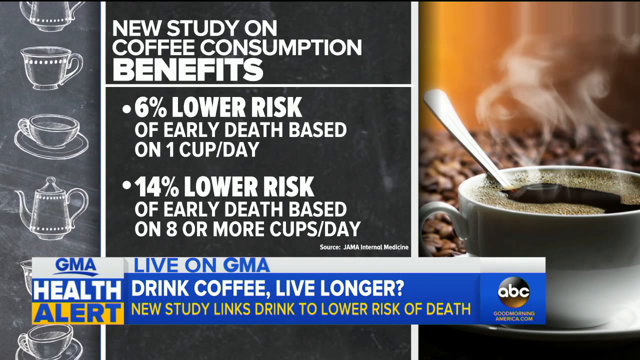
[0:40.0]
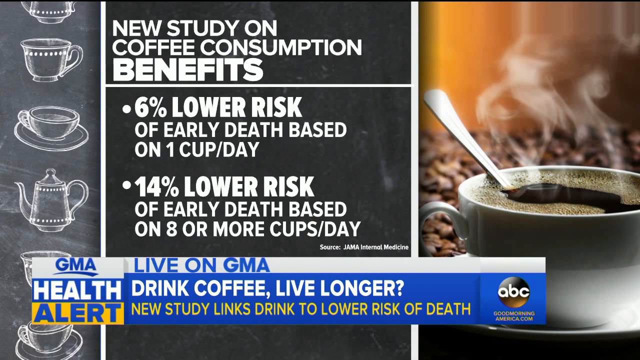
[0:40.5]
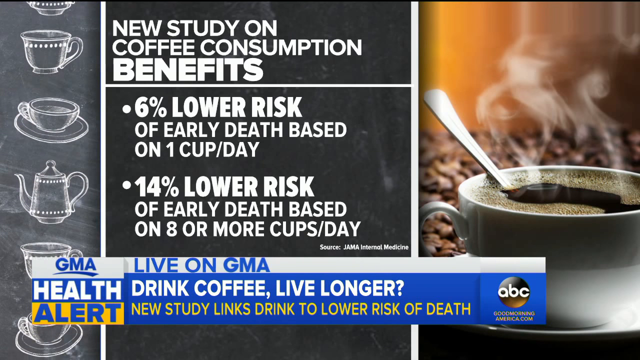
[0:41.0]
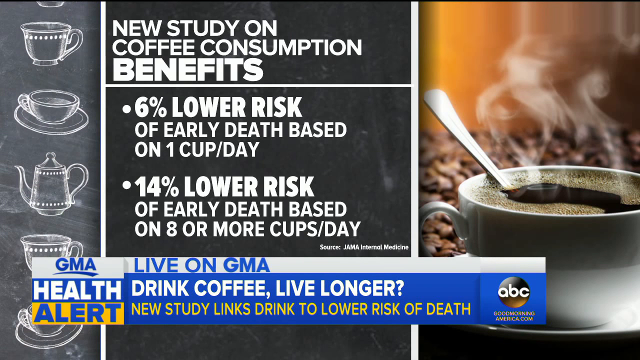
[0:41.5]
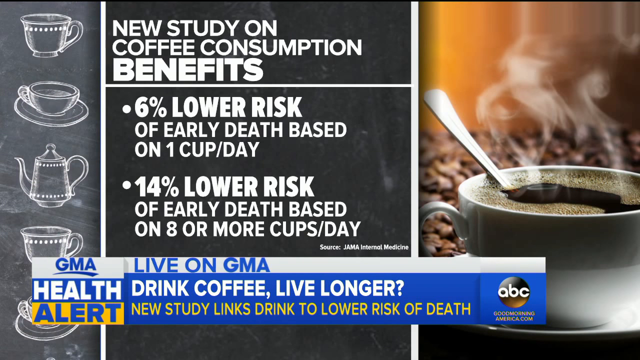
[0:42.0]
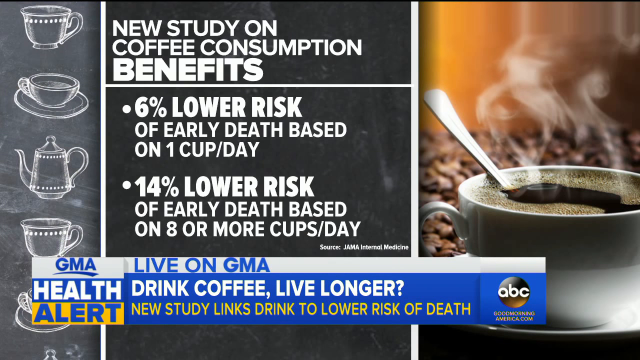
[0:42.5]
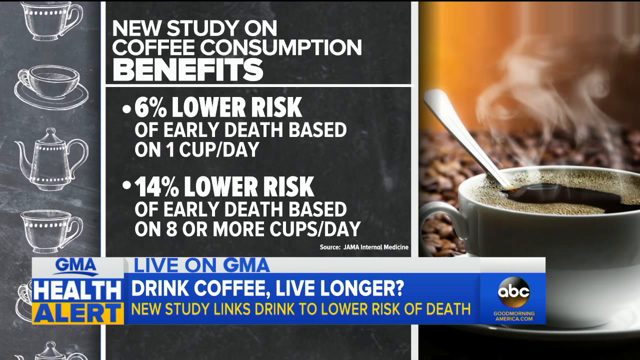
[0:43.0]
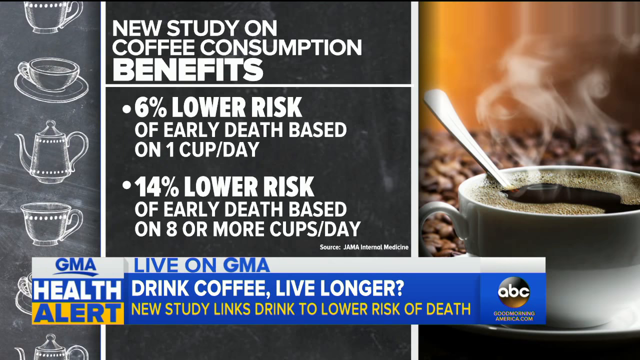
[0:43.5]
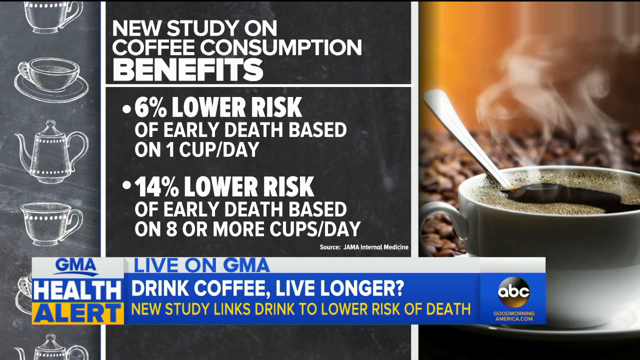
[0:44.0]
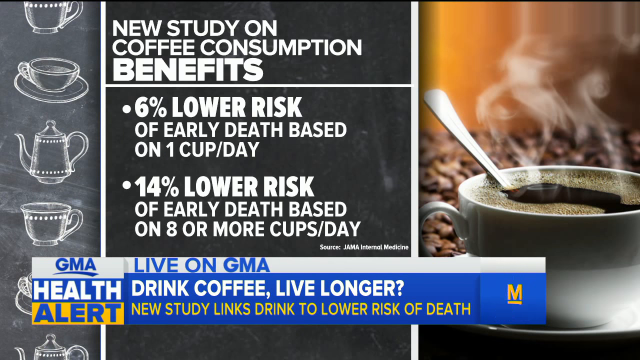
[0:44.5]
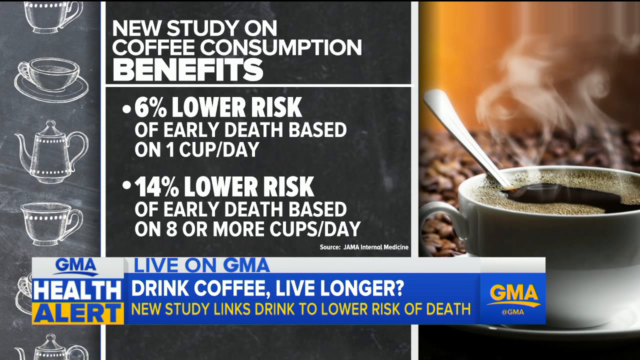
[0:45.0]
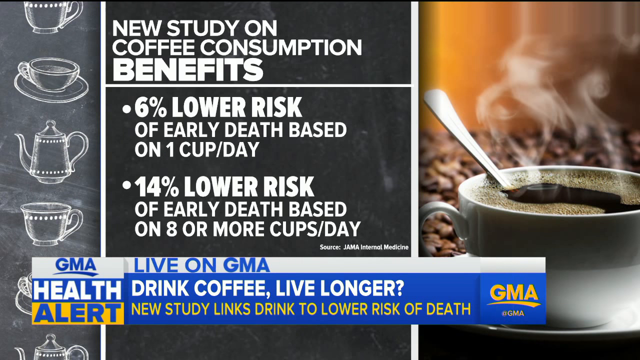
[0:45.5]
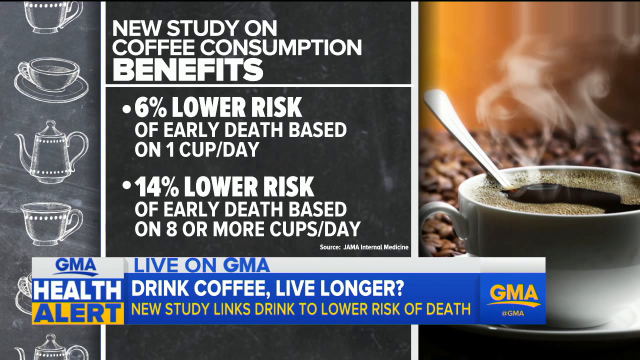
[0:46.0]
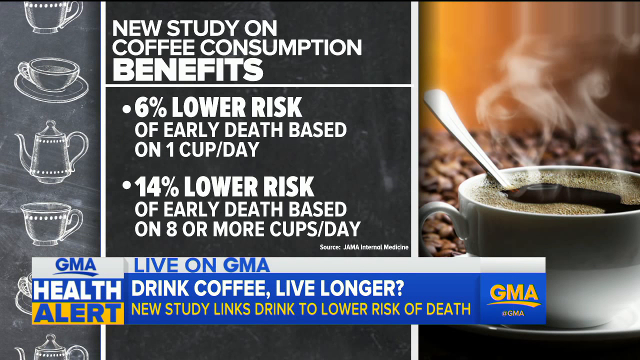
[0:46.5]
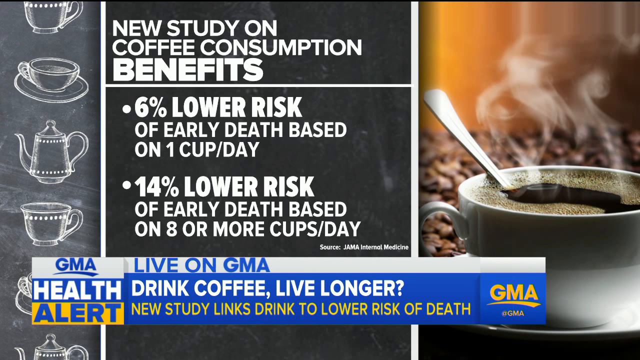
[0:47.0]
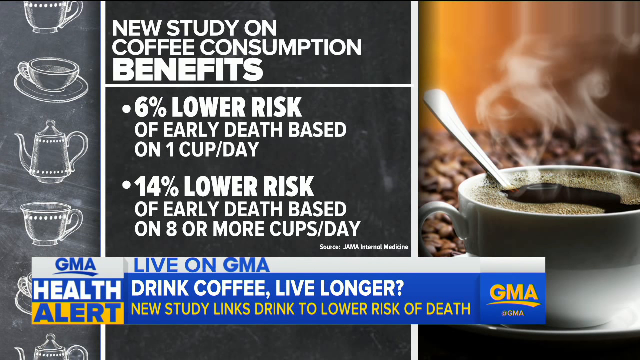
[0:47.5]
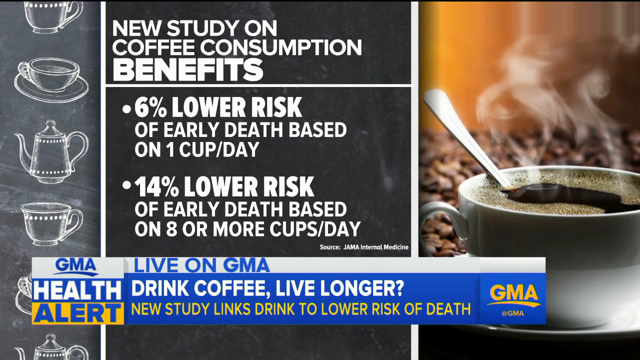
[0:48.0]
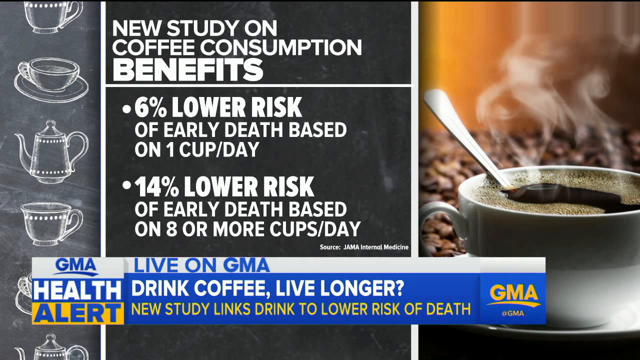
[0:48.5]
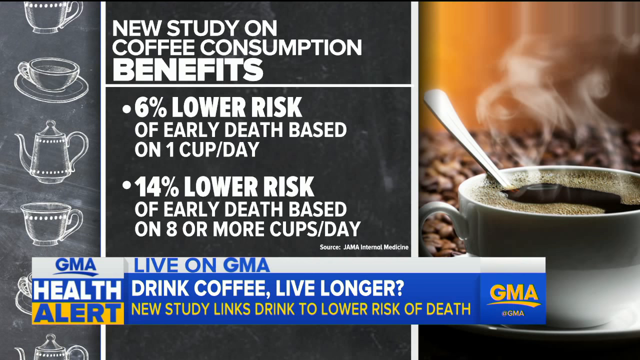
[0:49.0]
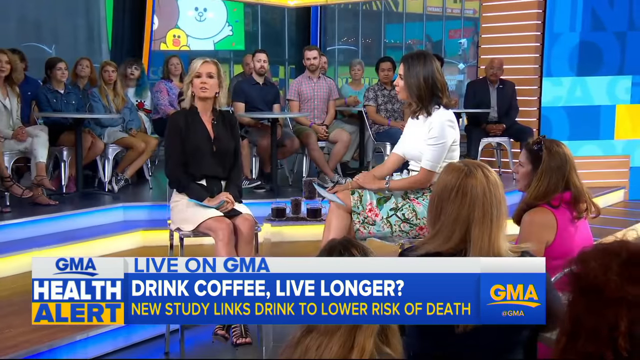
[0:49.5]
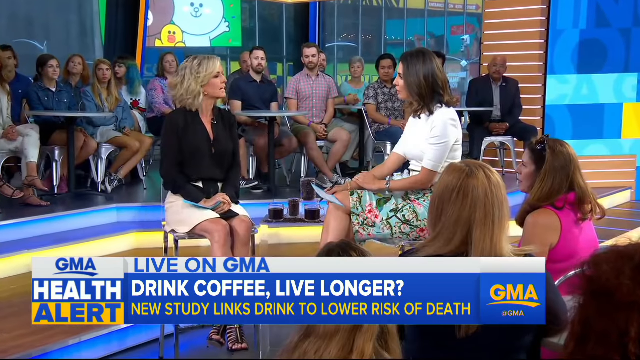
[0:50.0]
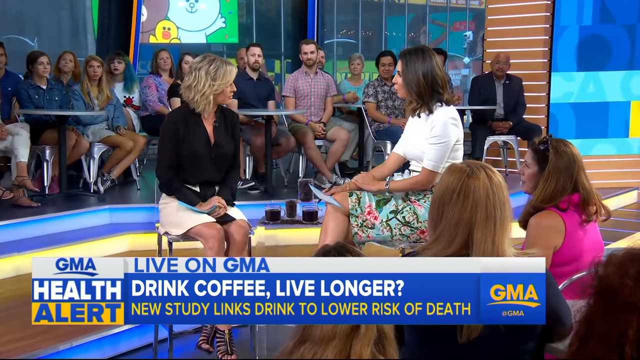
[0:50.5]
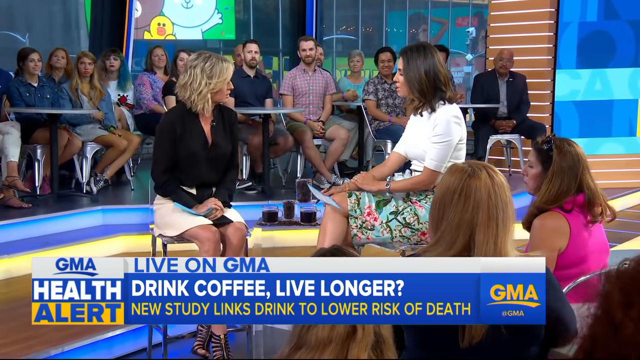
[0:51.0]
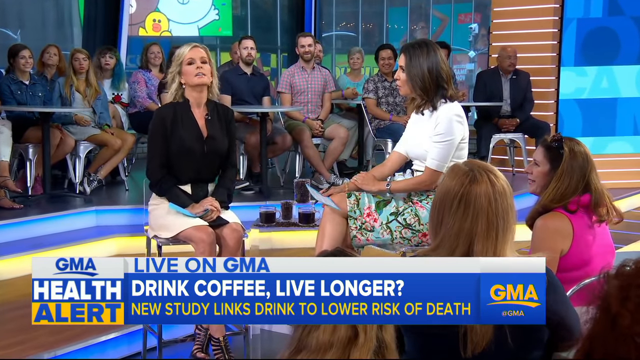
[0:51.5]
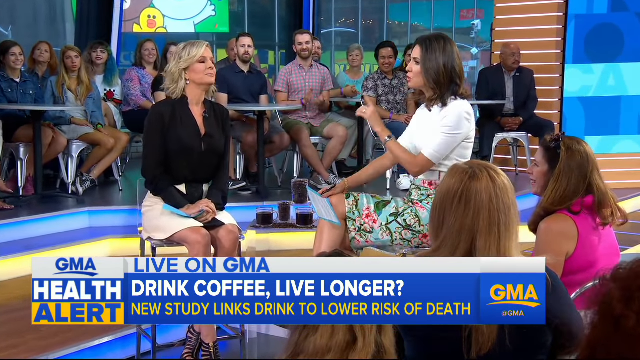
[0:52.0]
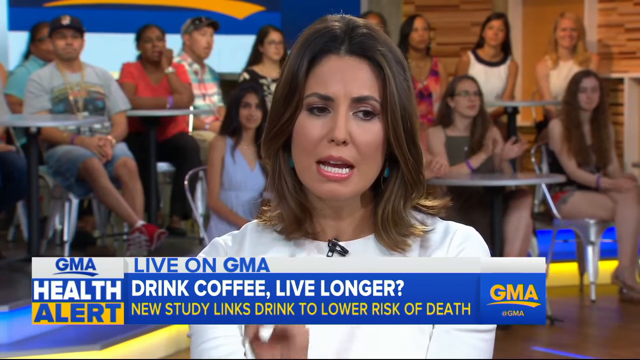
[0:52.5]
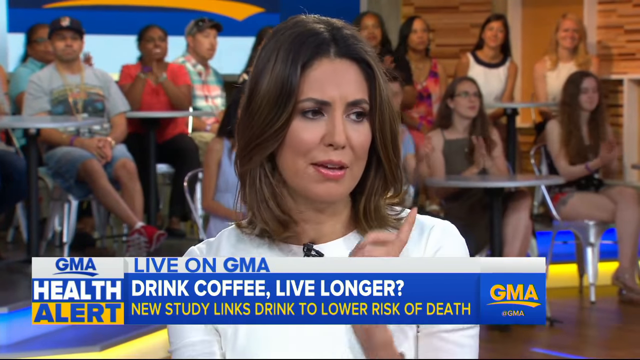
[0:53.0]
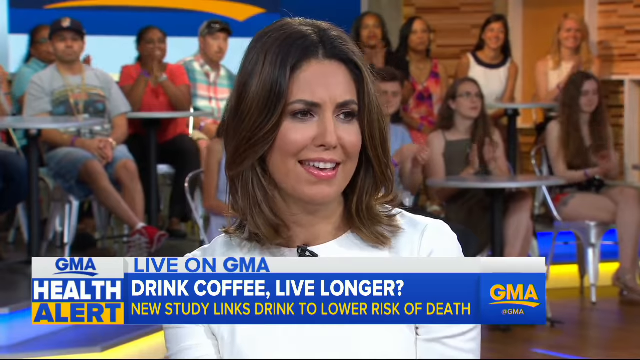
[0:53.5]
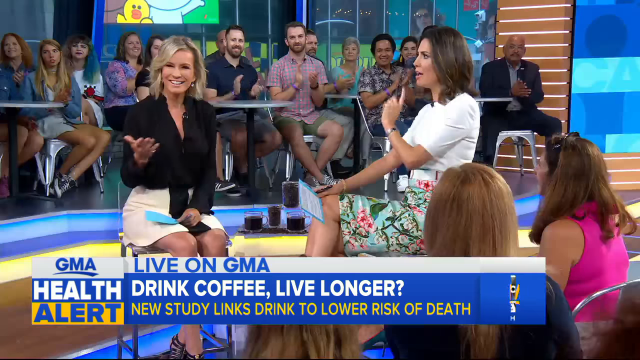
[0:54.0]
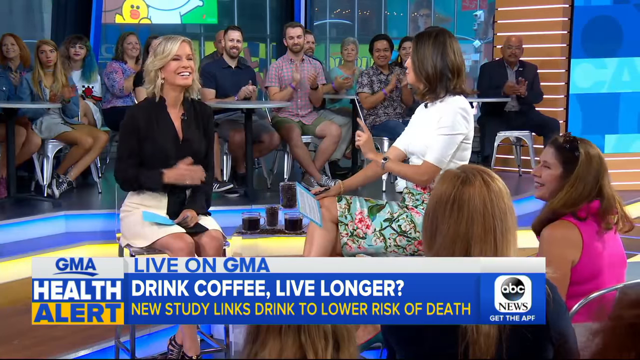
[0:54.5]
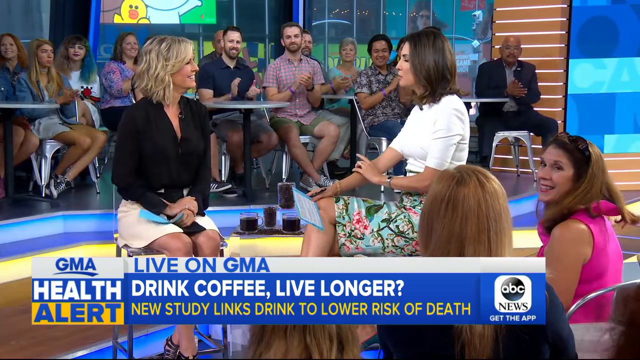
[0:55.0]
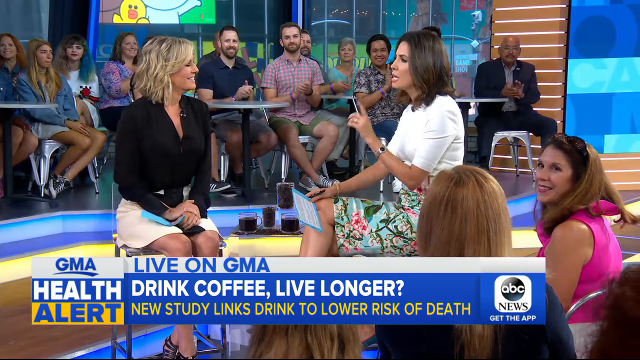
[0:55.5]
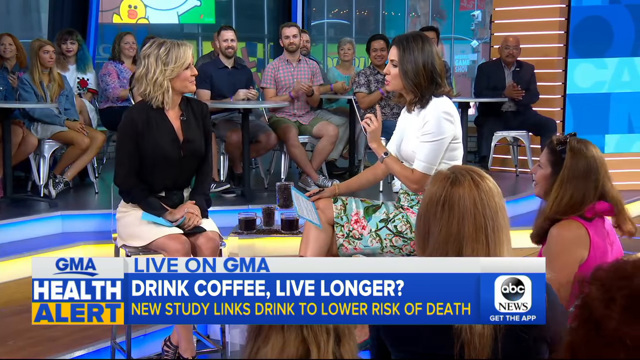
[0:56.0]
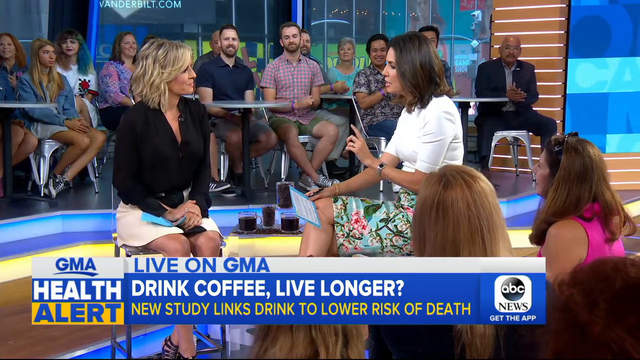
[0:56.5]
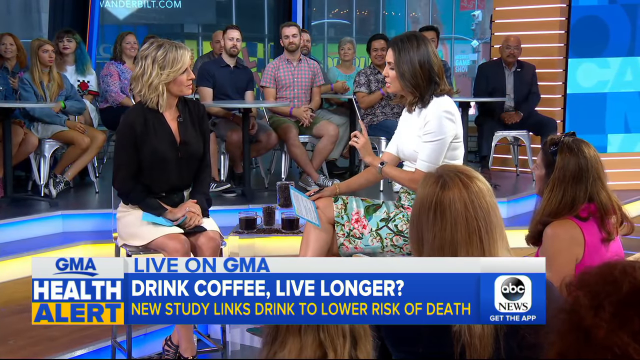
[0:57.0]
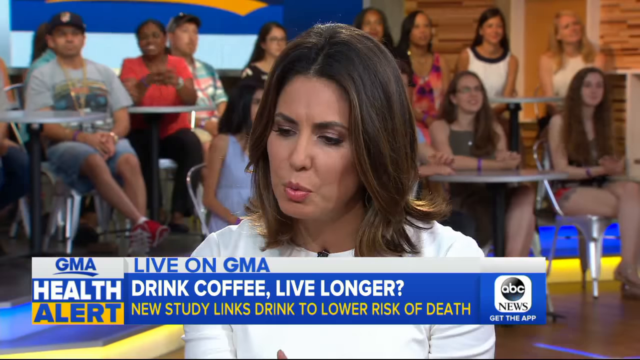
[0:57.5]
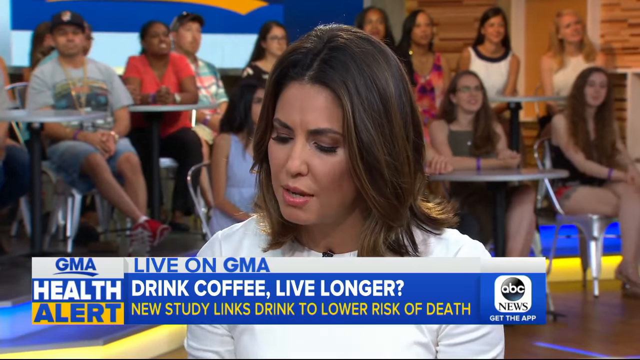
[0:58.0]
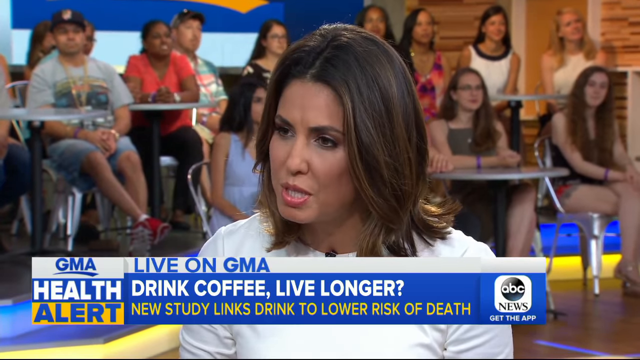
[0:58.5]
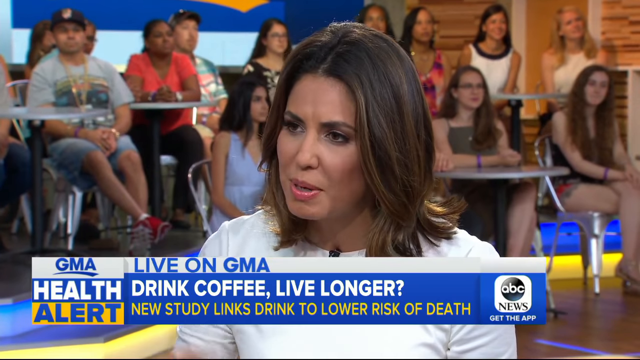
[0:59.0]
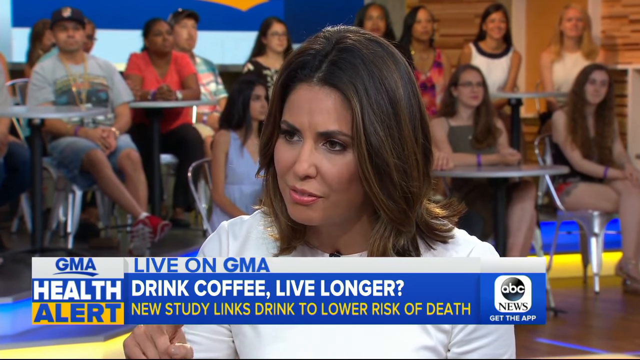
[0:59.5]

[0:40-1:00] The new study on coffee consumption benefits is presented on screen by GMA TV Health Alert. The view shifts from the screen to Dr. Jennifer and the presenter talking. The presenter points with a finger and says something that makes the audience clap and Dr. Jennifer smile. The two continue talking, and the presenter keeps making non-verbal cues as the conversation moves forward.